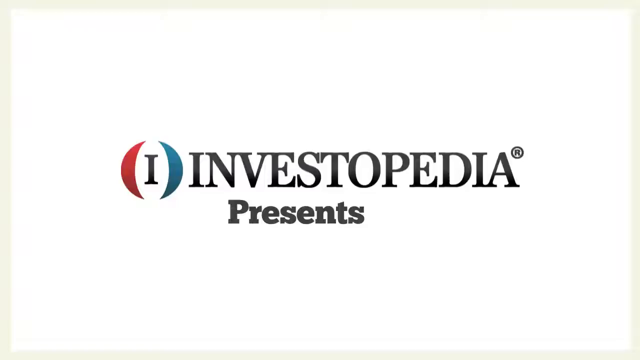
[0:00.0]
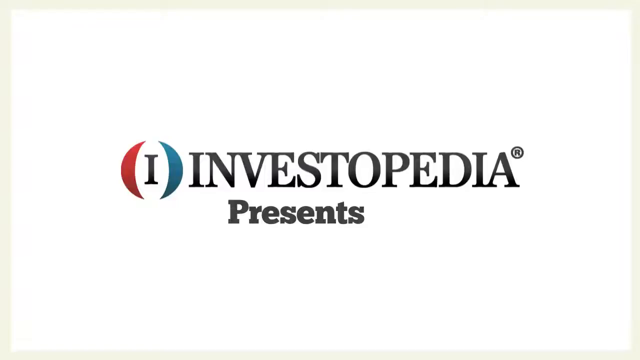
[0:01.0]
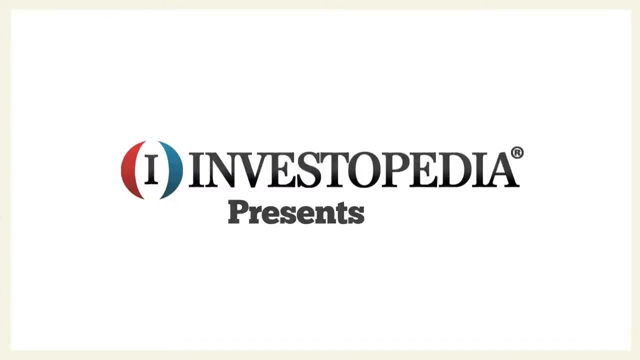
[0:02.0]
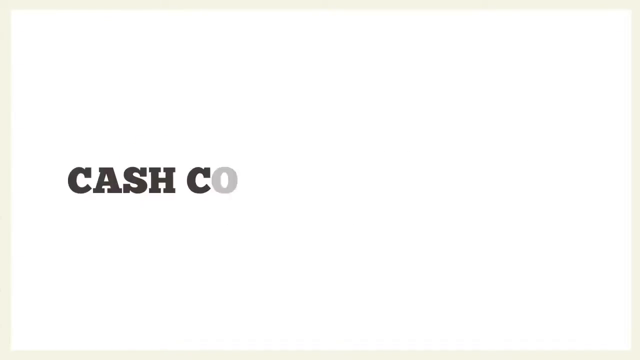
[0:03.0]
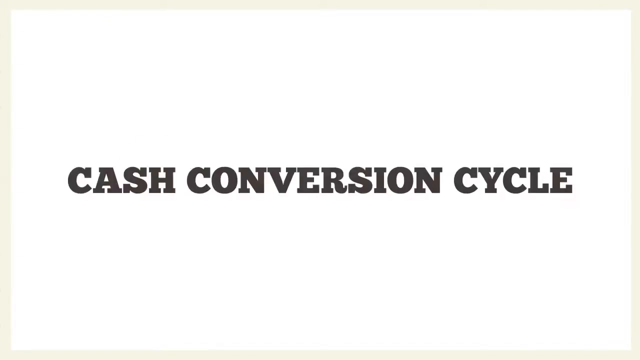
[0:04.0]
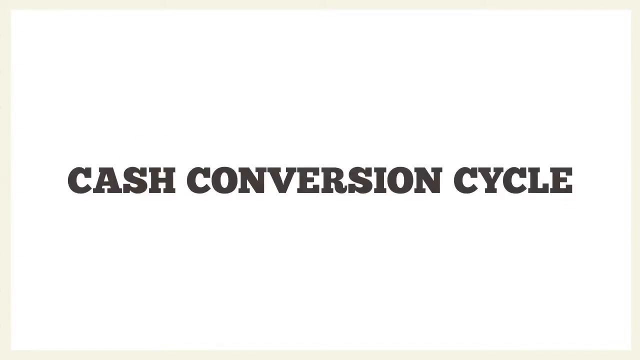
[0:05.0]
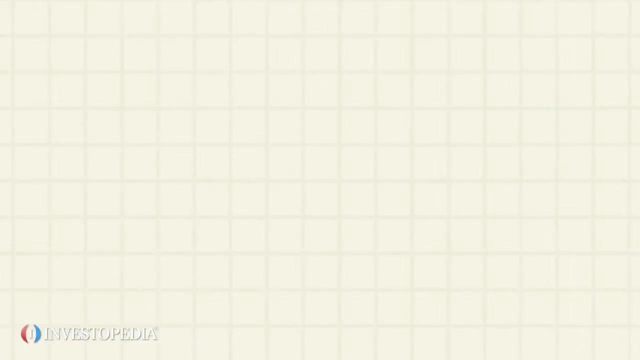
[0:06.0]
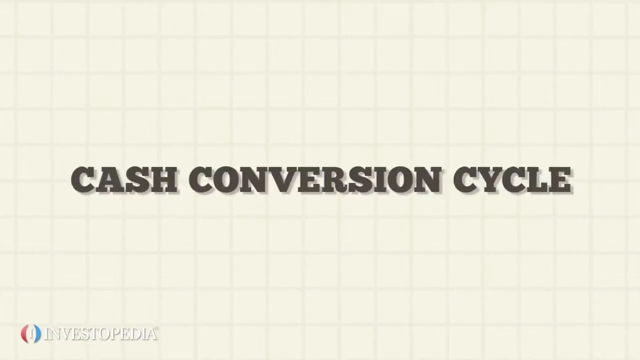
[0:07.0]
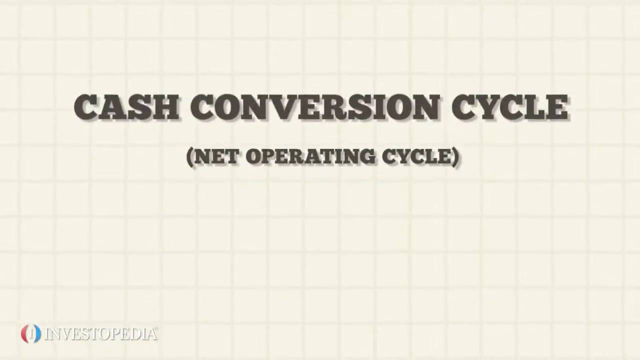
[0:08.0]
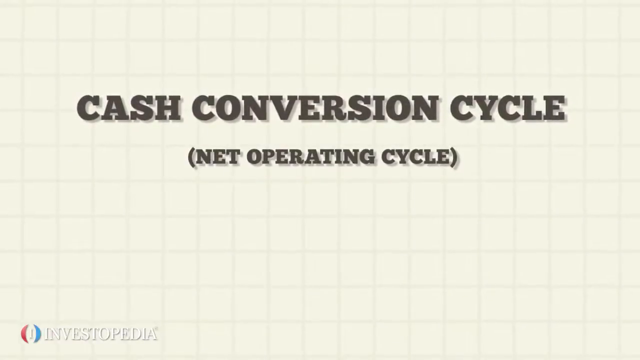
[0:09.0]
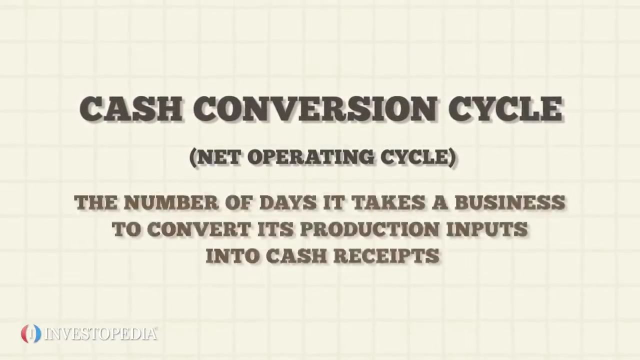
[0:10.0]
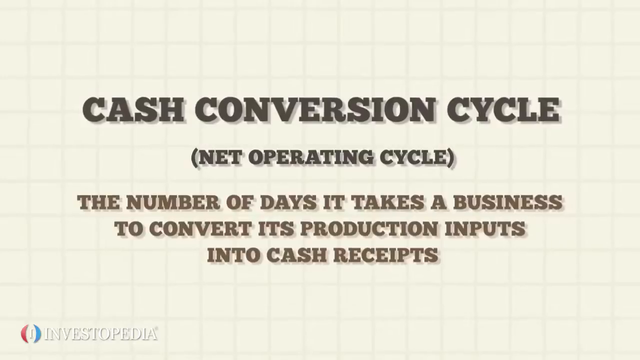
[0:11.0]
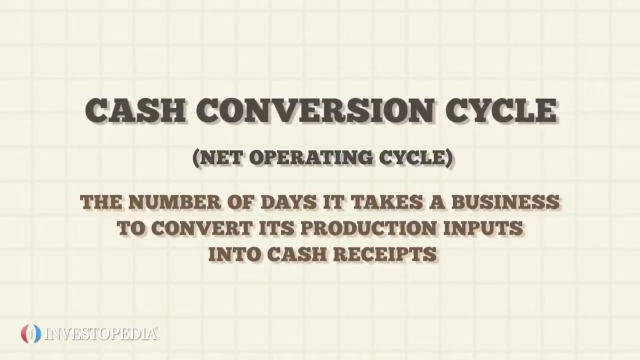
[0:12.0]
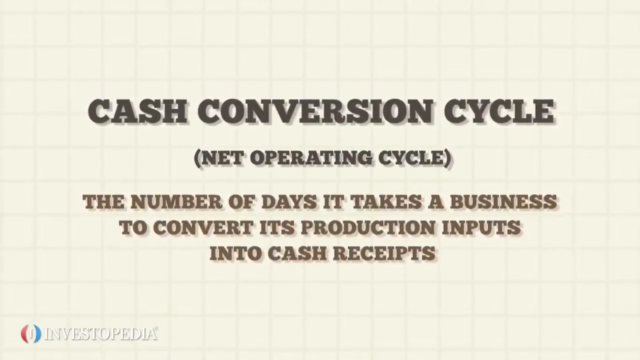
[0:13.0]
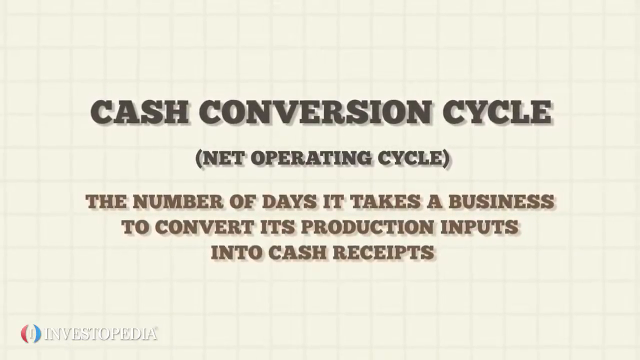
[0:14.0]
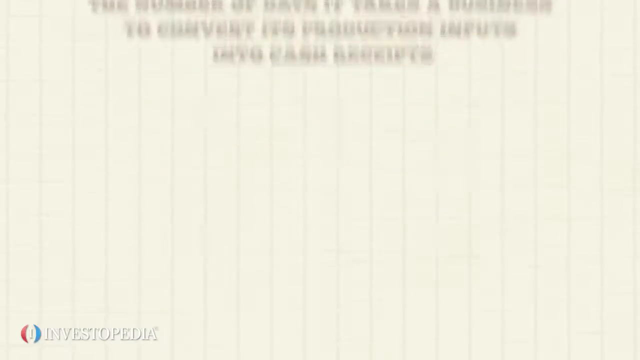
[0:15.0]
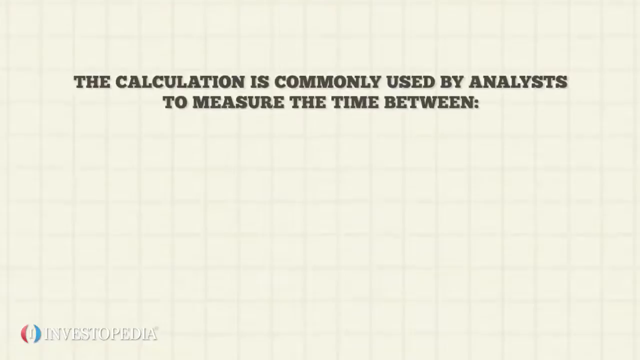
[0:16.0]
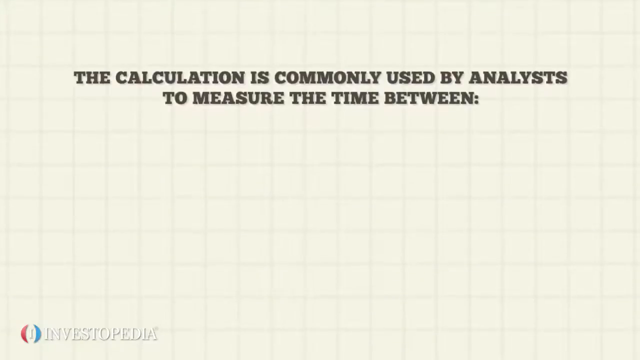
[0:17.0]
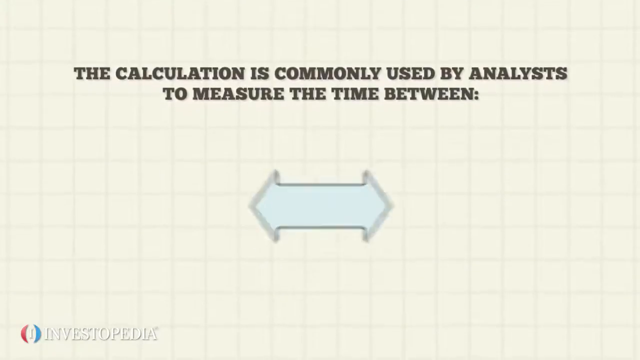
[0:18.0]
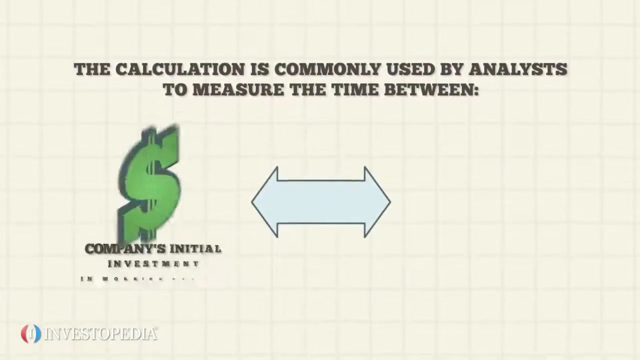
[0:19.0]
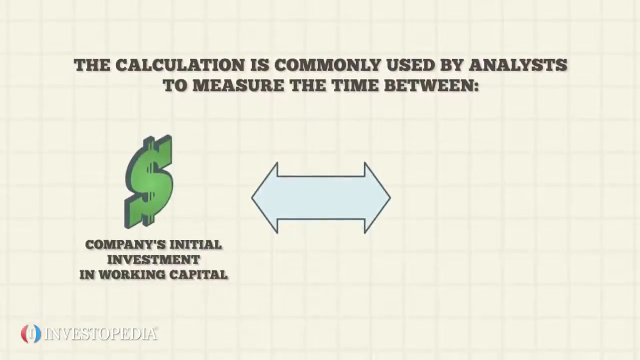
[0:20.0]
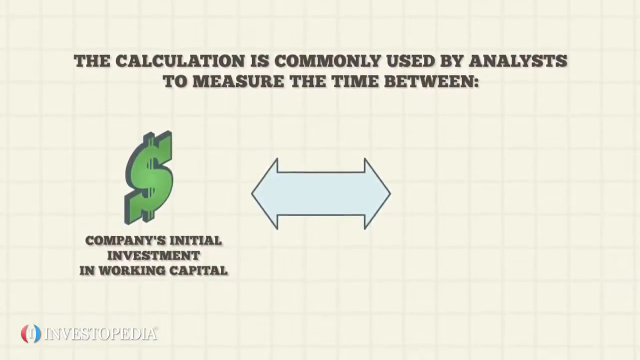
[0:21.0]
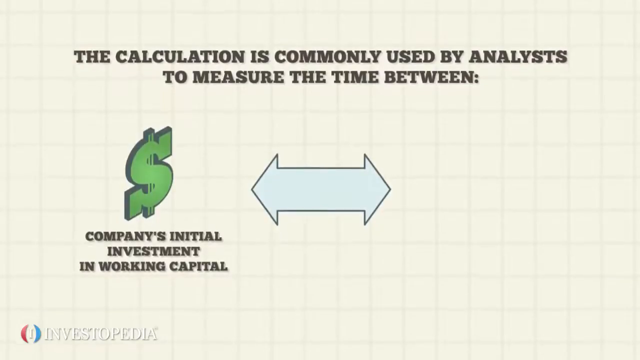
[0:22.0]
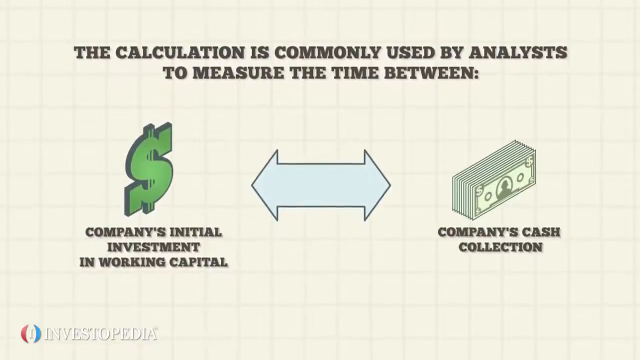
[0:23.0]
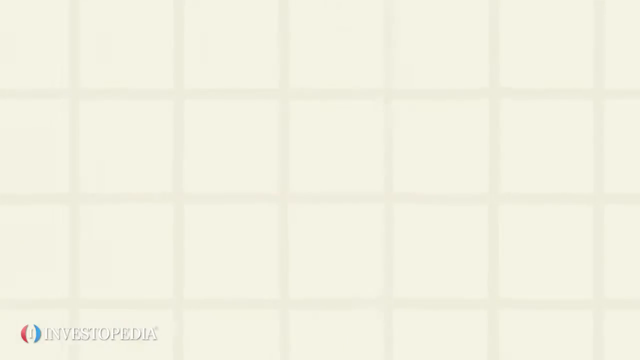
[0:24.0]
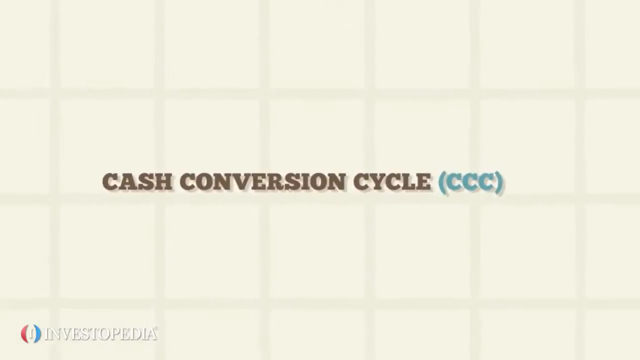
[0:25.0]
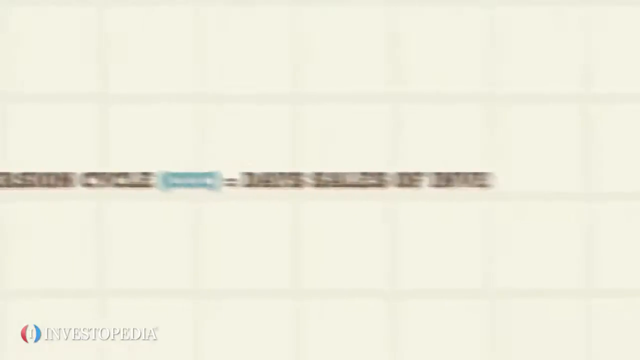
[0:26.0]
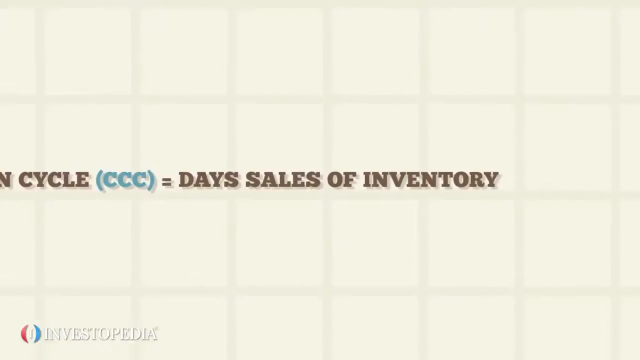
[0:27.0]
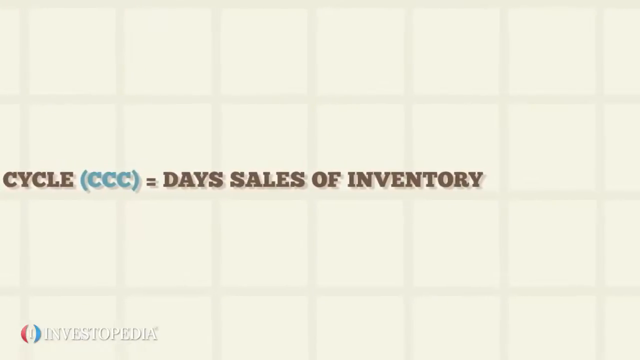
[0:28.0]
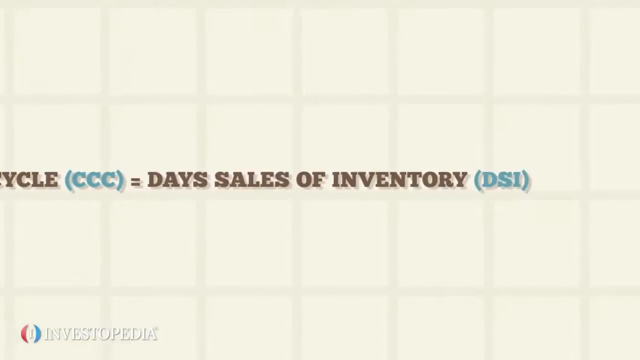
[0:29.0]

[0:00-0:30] On a white background is a red and blue logo with an eye in the middle. "Investopedia" appears with an R up there, followed by "presents". "Presents" is written in bold, while "Investopedia" is in capital letters in a big, heavy font. This disappears, and "cash conversion cycle" appears in bold black capital letters. Another "cash conversion cycle" appears, and "net operation cycle" appears below it in brackets. The background now has small boxes in yellowish or cream white, and the logo appears at the bottom. Text reads "the number of days it takes a business to convert its production inputs into cash receipts". That text then disappears upward and other information appears: first a blue shape of two arrows, then a green dollar sign with information written in black. A money or cash box appears as well, and then it disappears. Text then moves from right to left in different fonts, in blue and brown.